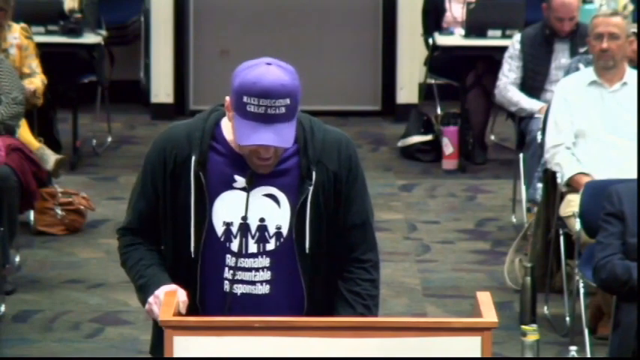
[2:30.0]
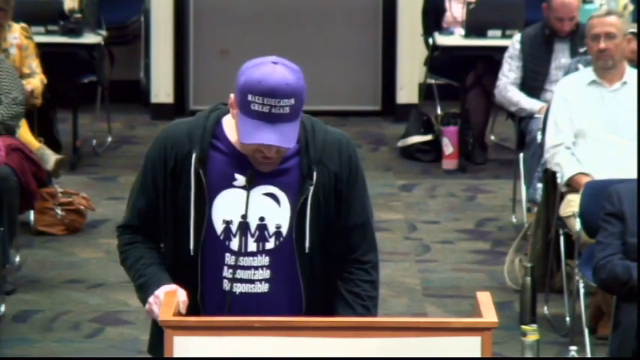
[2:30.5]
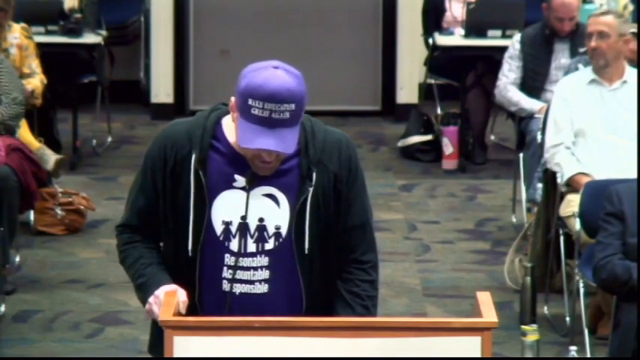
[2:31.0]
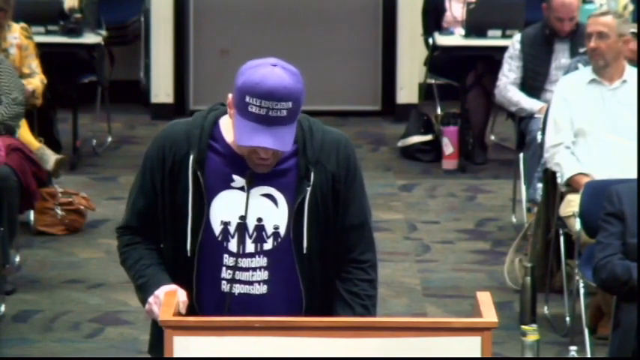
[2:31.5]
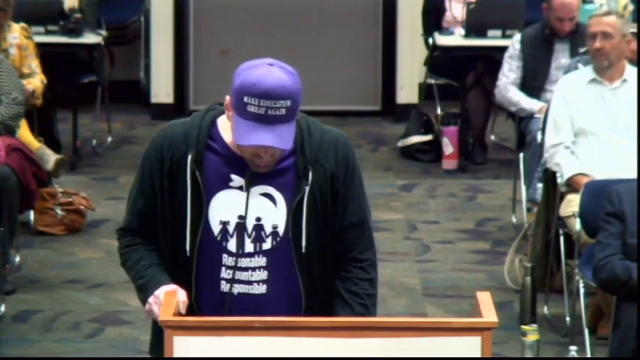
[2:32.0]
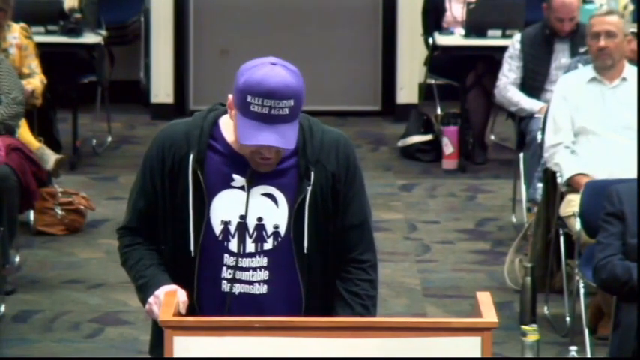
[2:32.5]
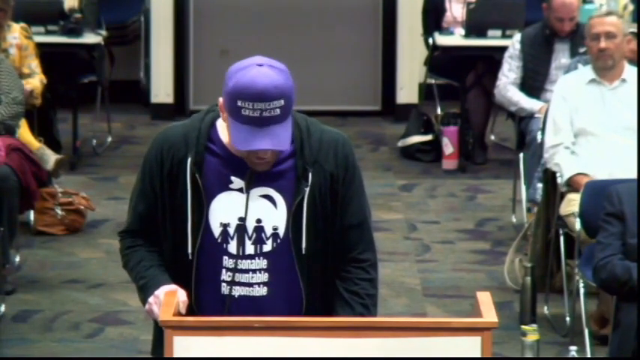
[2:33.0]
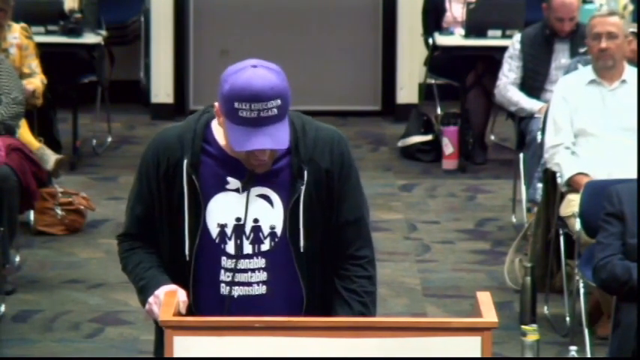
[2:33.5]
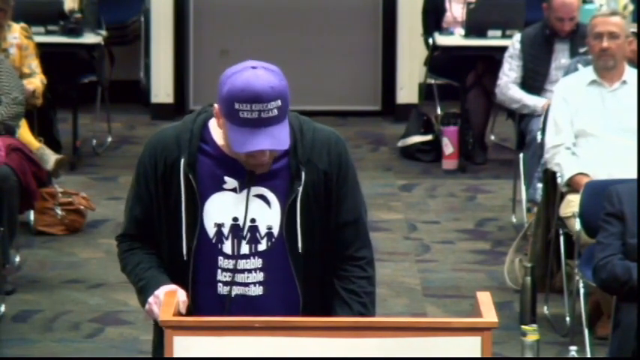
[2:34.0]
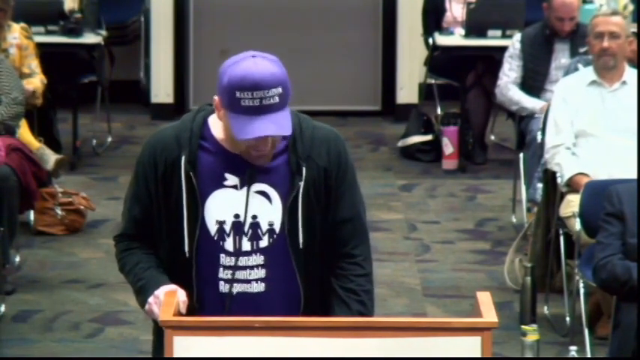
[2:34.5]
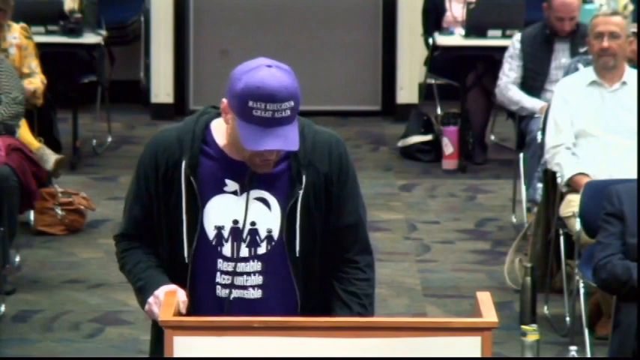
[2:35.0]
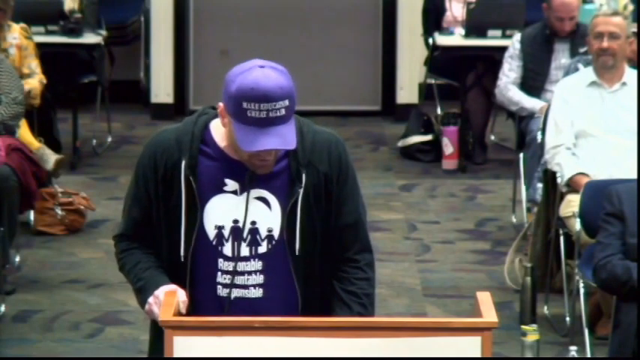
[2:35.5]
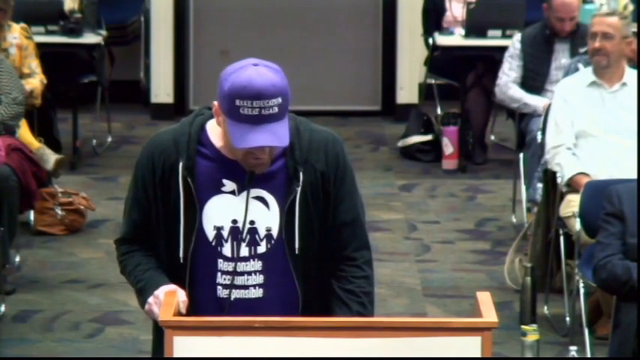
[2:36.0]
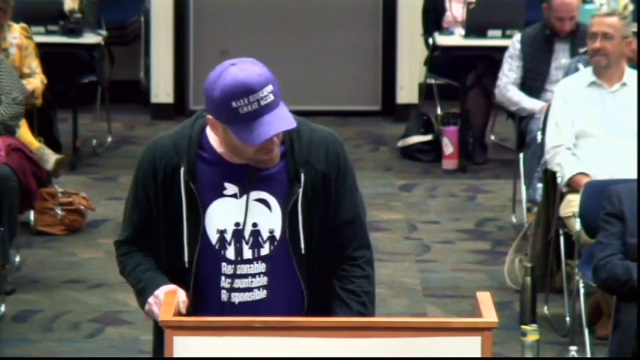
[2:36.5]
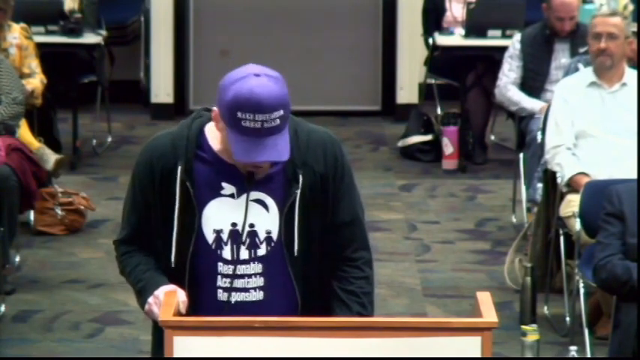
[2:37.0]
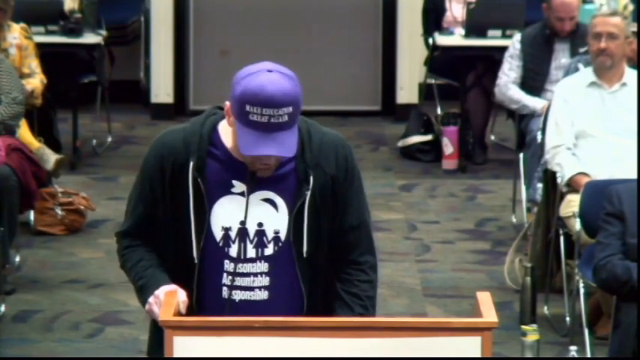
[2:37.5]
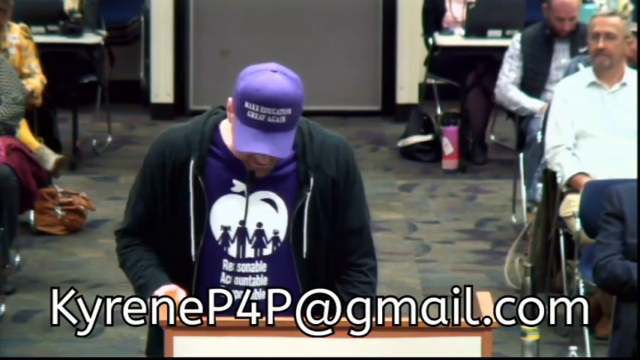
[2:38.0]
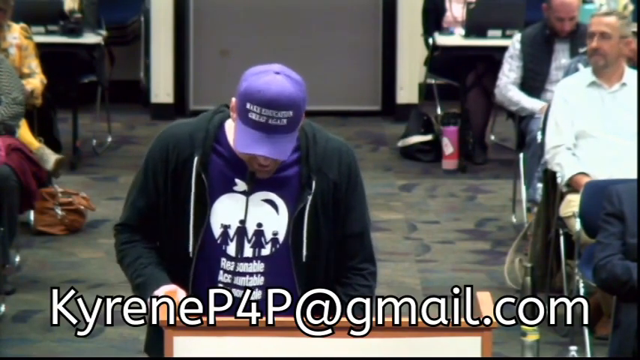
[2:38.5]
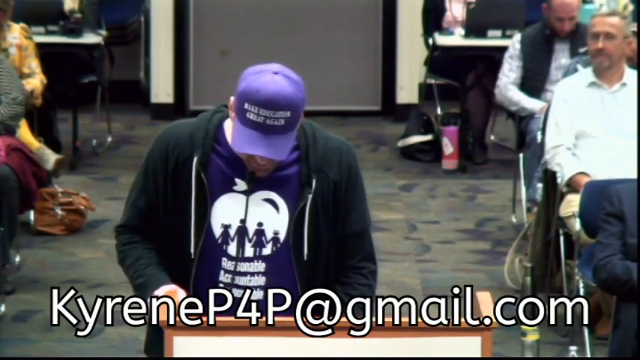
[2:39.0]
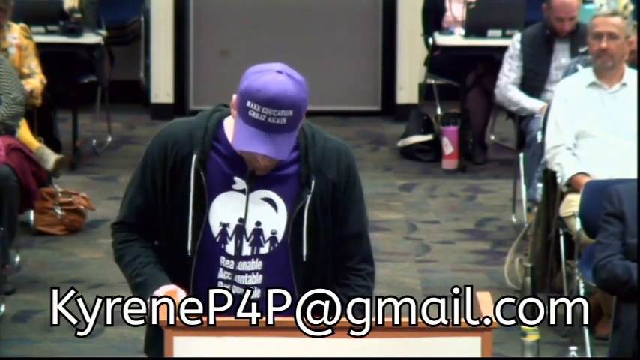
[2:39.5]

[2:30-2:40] A man in a purple shirt and black hoodie is talking; he seems very animated, moving his head as he speaks. His purple shirt has a drawing of a white apple with a family drawn in purple inside, which looks like a family of four: a father, mother, daughter and son. There is white printing on the t-shirt below the drawing and white printing on his cap. The words "KyreneP4P@gmail.com" appear on the video.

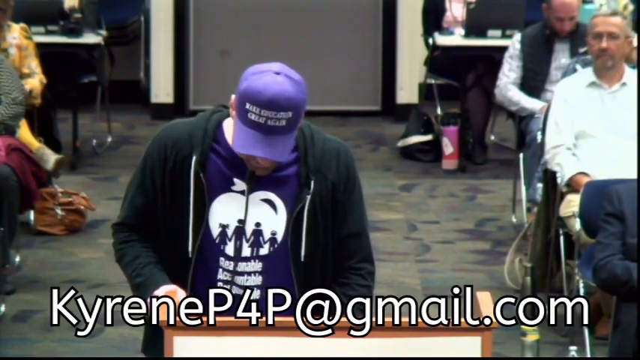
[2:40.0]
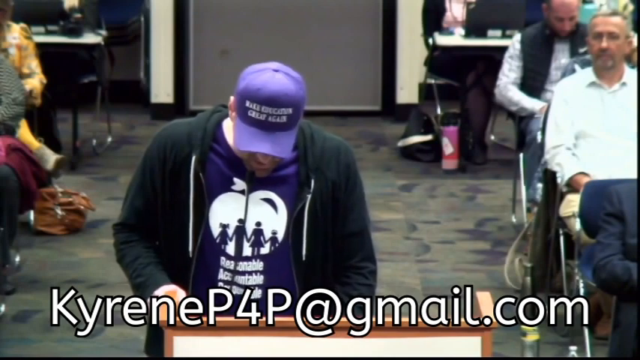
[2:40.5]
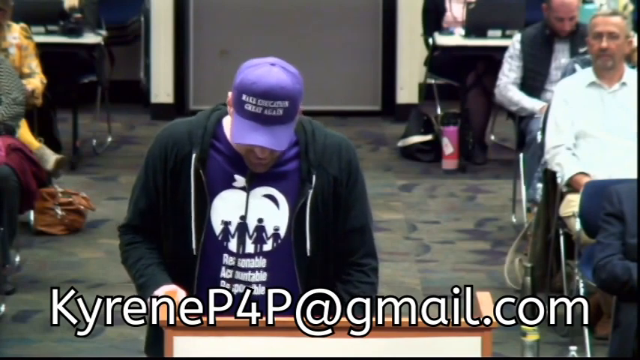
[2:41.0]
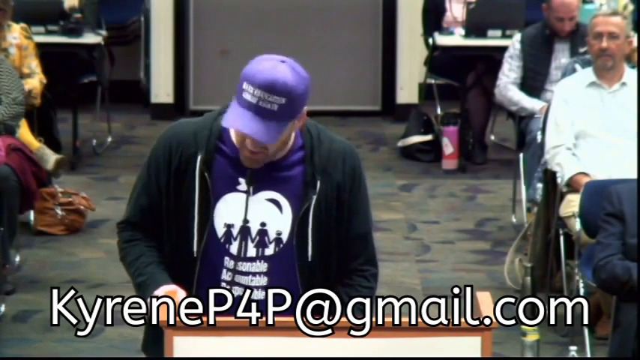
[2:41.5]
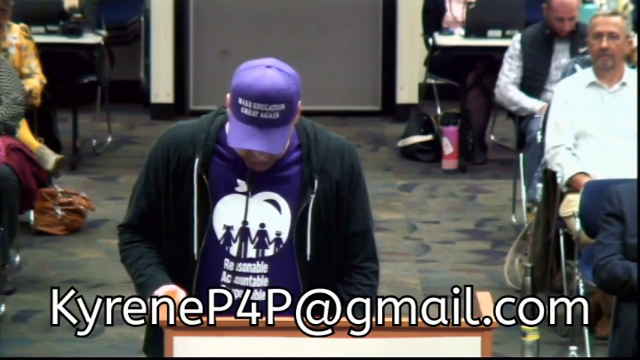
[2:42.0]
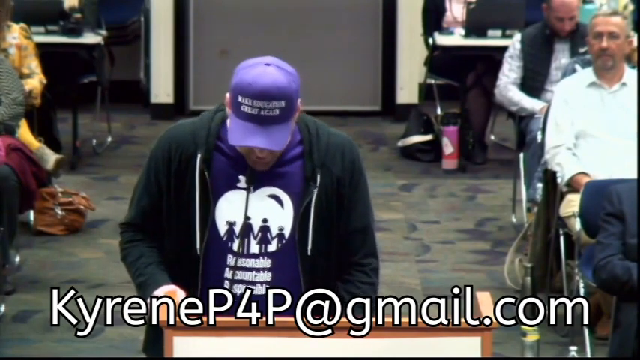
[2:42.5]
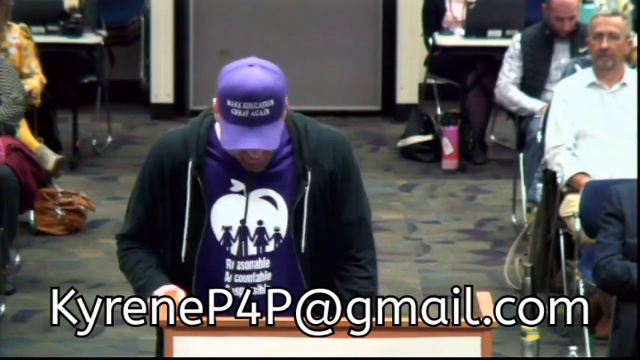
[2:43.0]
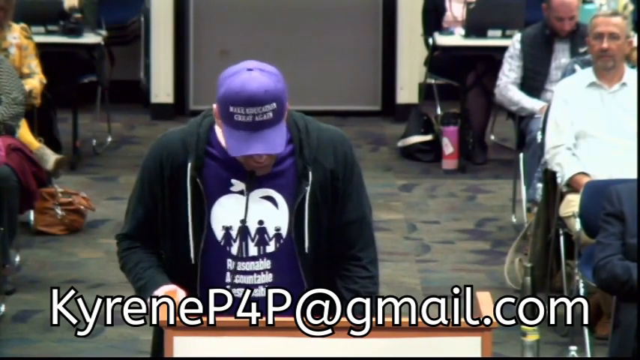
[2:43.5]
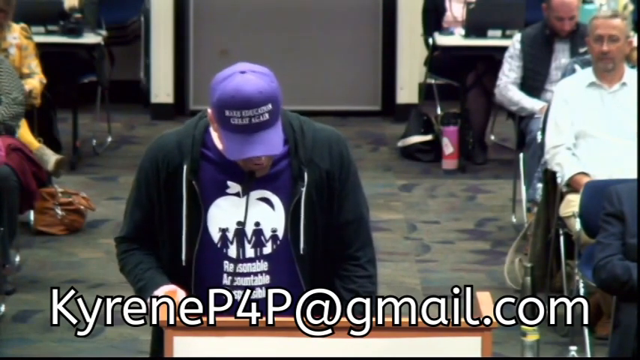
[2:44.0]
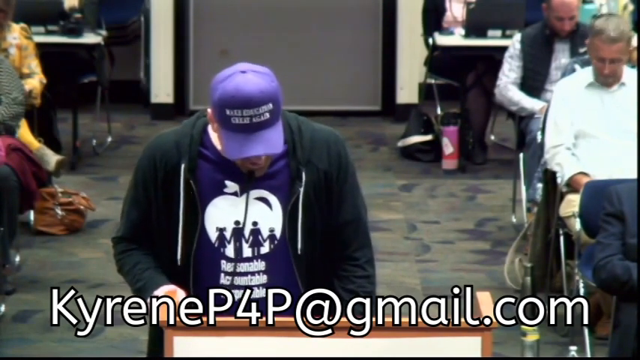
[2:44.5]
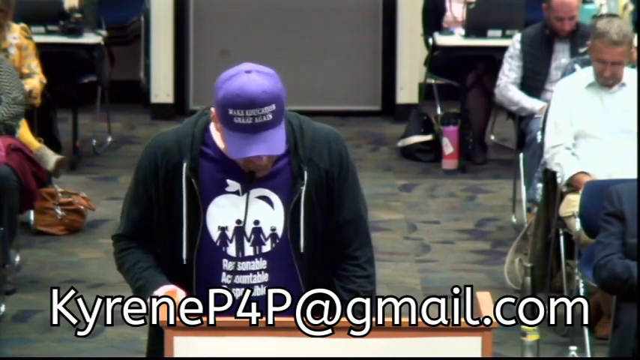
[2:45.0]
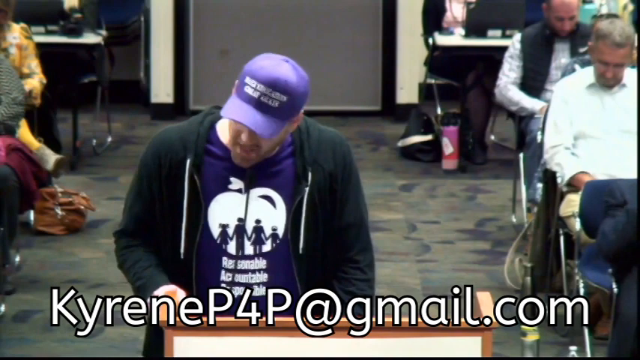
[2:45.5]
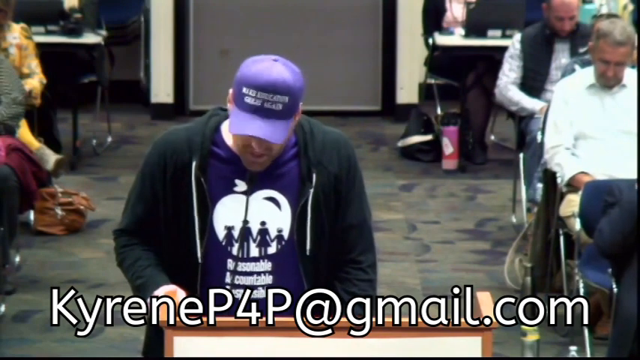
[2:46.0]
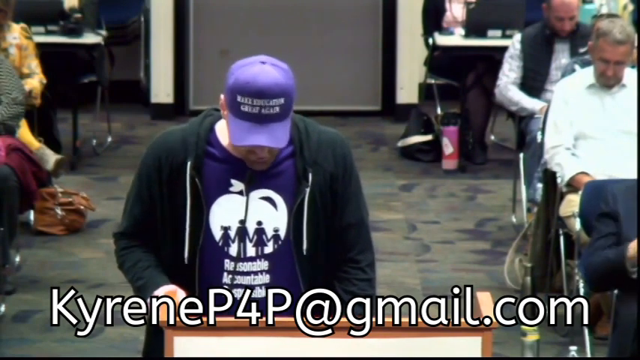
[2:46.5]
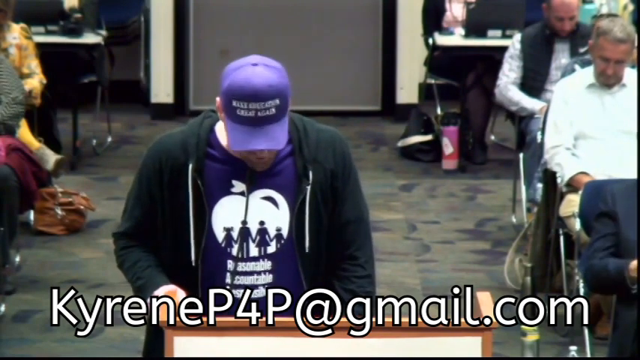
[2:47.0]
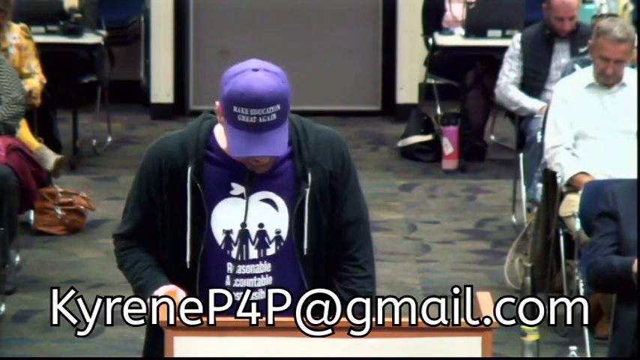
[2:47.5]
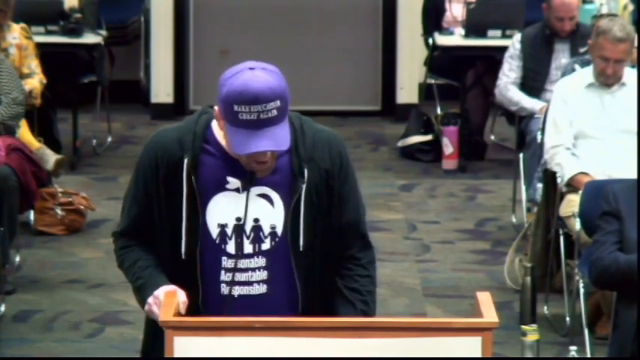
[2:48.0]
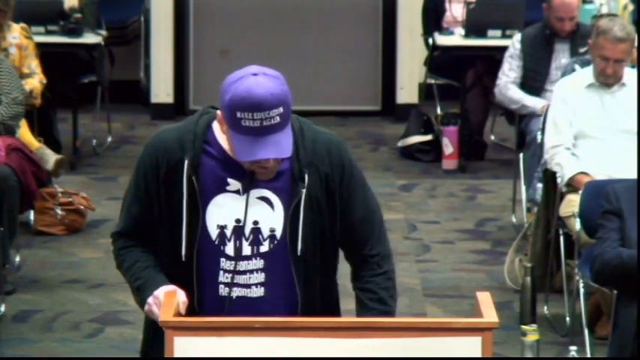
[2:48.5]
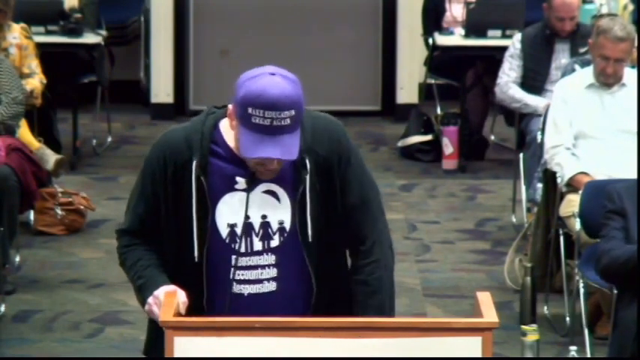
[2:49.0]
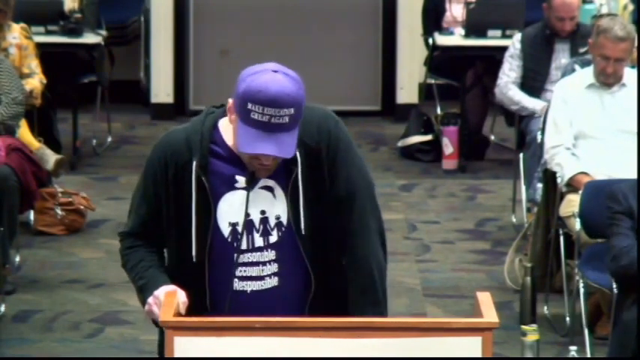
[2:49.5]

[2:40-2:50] A man is talking with the words "KyreneP4P@gmail.com" on the screen. He seems very animated by the way he moves his head. He is standing by a podium in a room with other people sitting to each side. He wears a black hoodie, a purple cap with white lettering, and a purple shirt with white lettering and a drawing of an apple with four family members drawn in purple inside, which appear to be a daughter, father, mother and son.